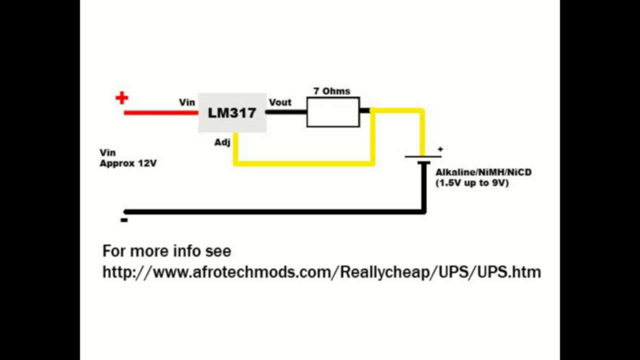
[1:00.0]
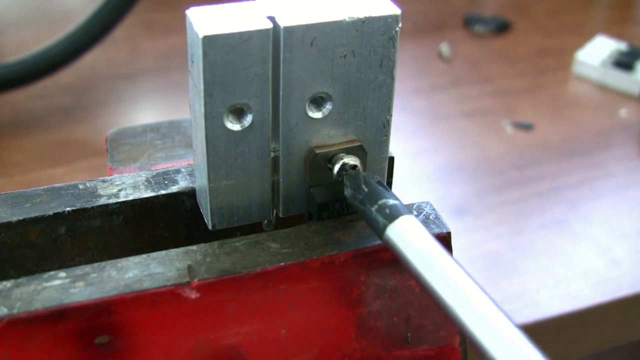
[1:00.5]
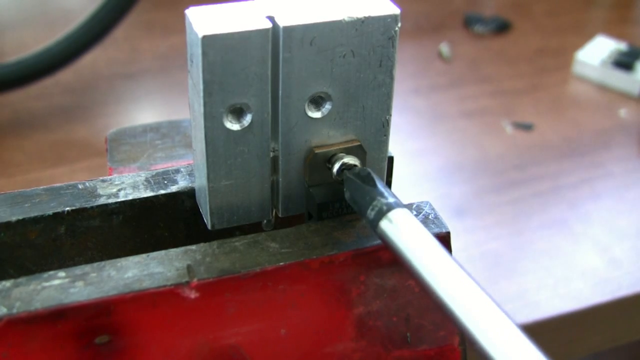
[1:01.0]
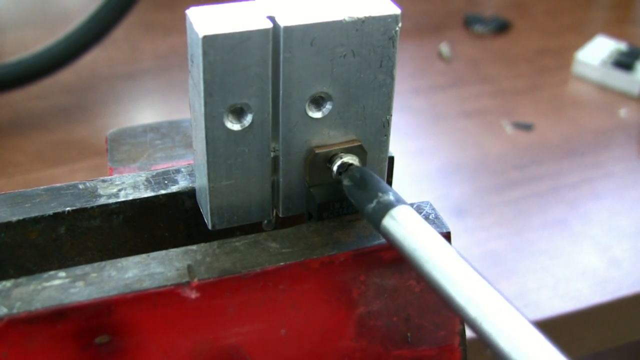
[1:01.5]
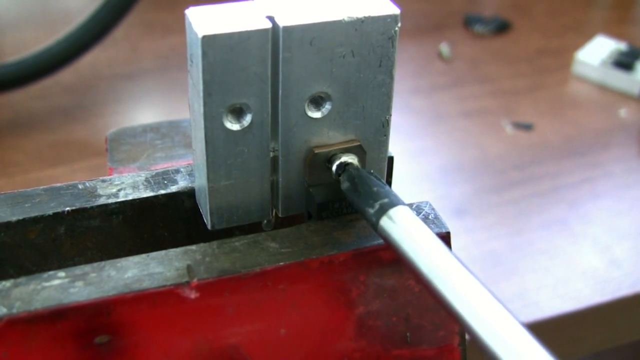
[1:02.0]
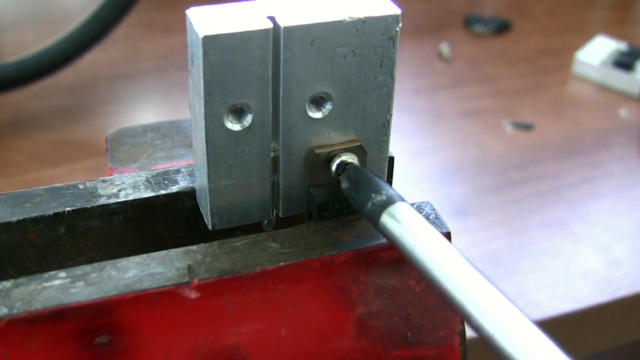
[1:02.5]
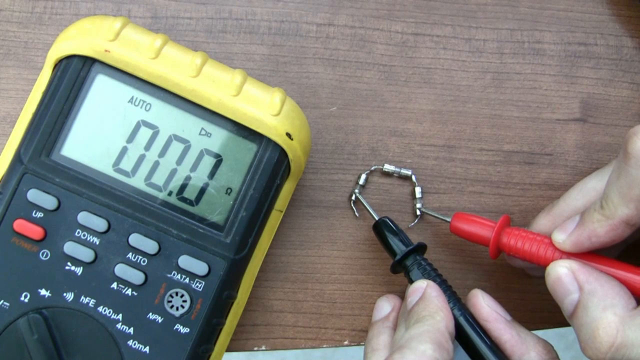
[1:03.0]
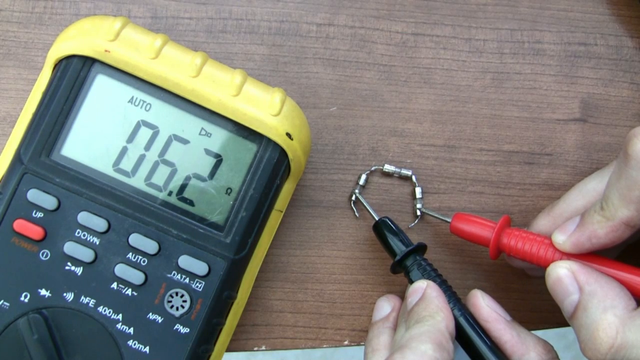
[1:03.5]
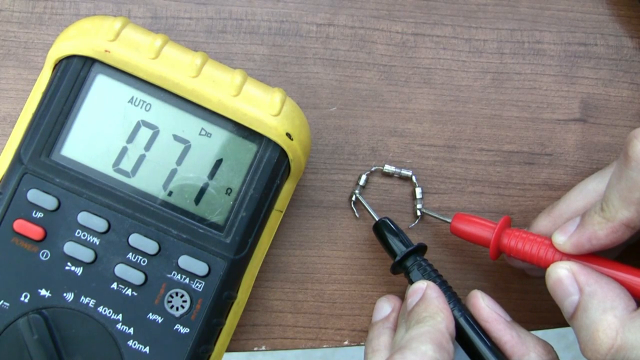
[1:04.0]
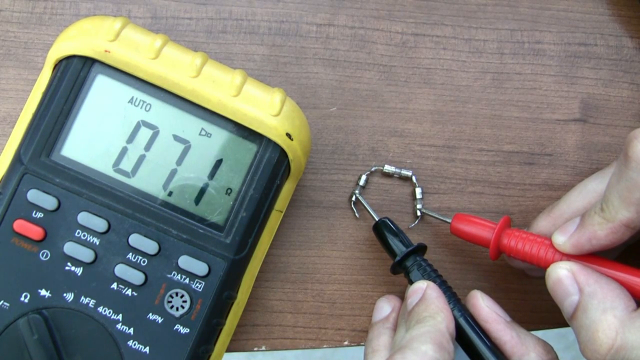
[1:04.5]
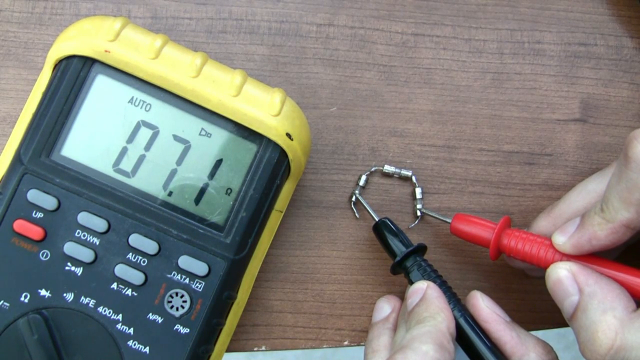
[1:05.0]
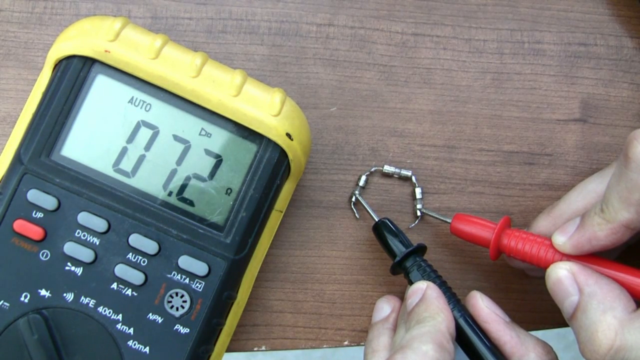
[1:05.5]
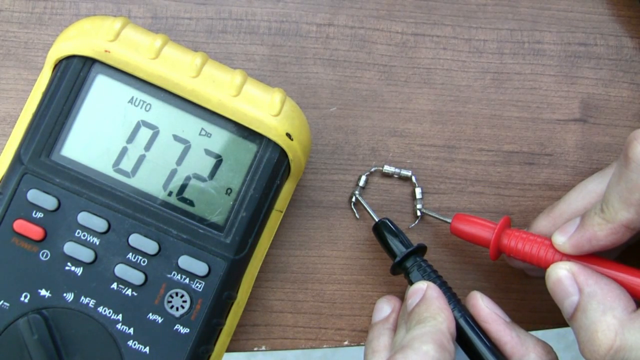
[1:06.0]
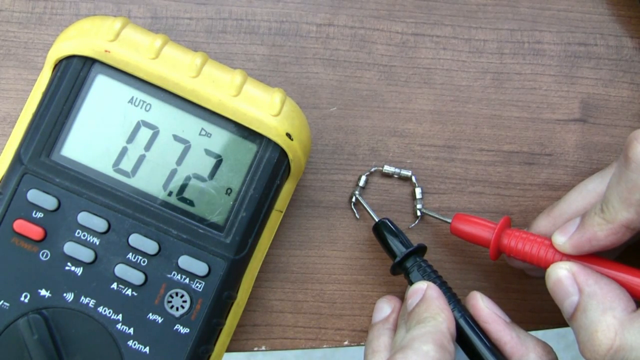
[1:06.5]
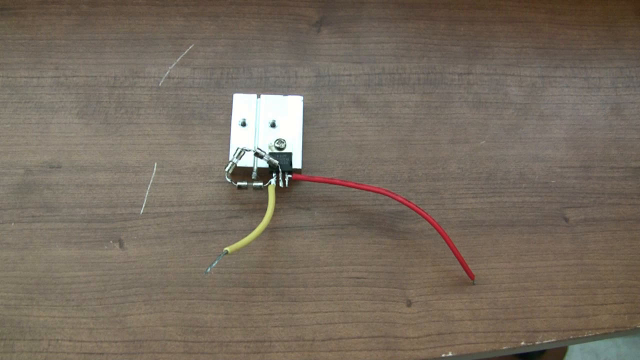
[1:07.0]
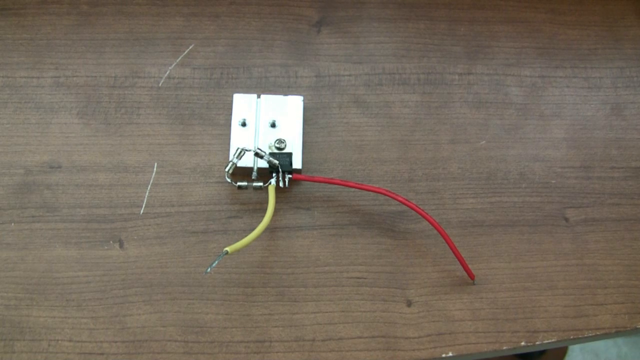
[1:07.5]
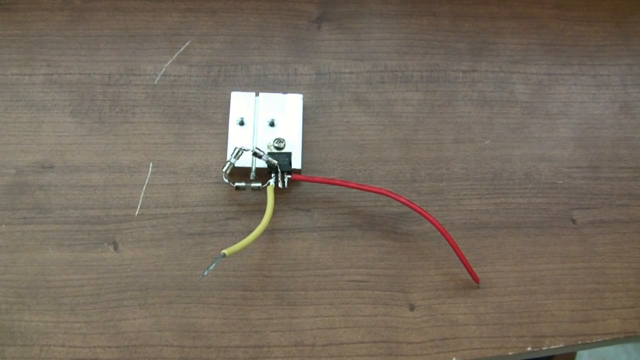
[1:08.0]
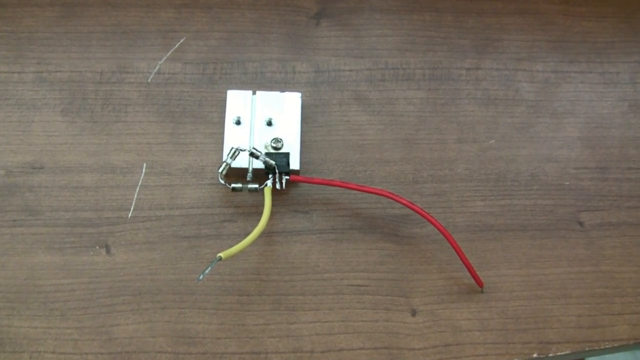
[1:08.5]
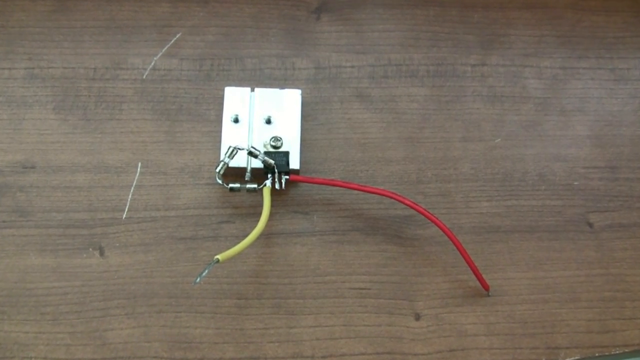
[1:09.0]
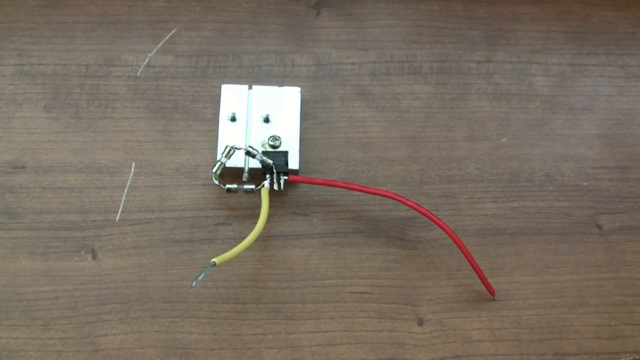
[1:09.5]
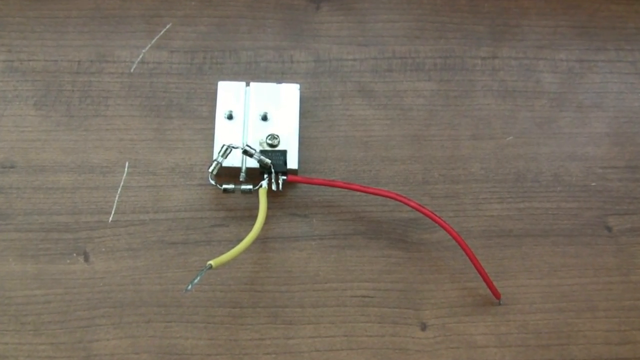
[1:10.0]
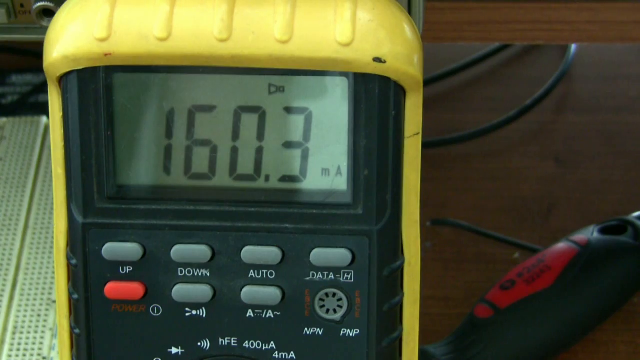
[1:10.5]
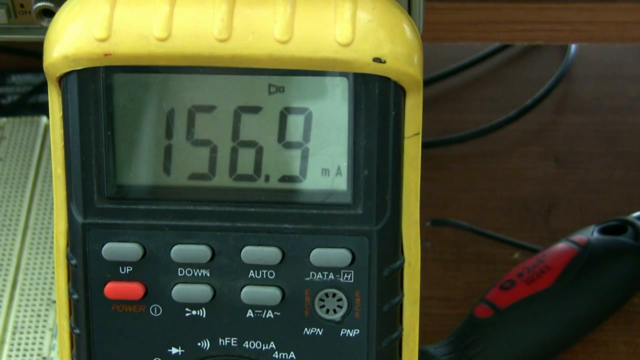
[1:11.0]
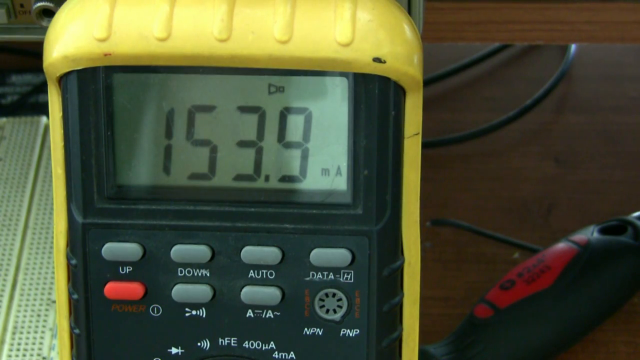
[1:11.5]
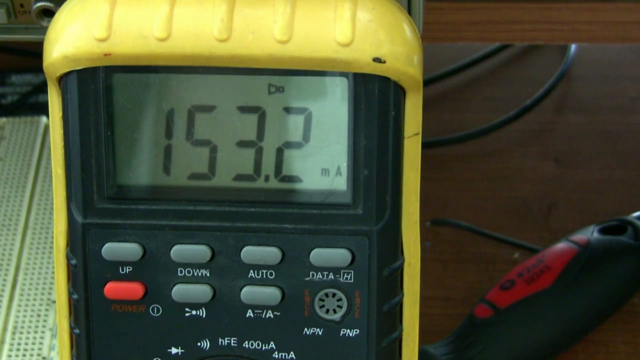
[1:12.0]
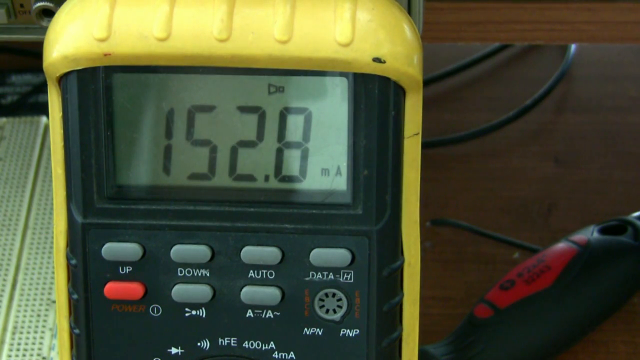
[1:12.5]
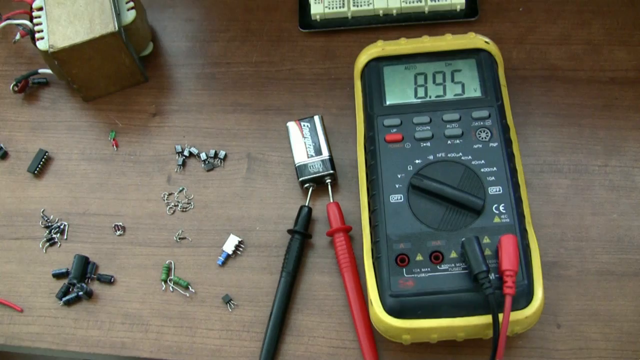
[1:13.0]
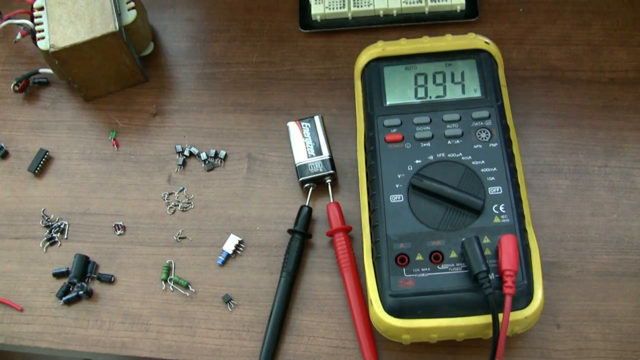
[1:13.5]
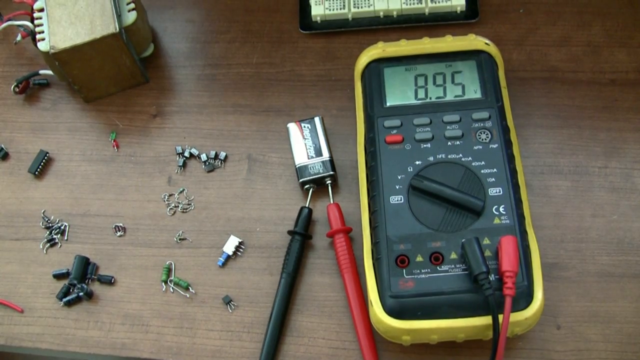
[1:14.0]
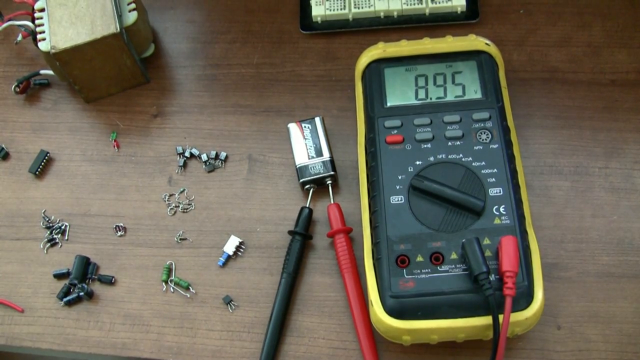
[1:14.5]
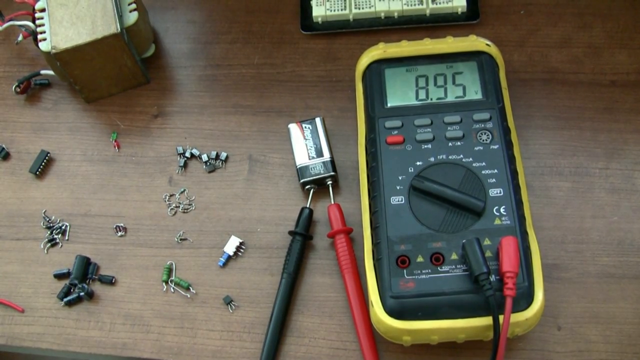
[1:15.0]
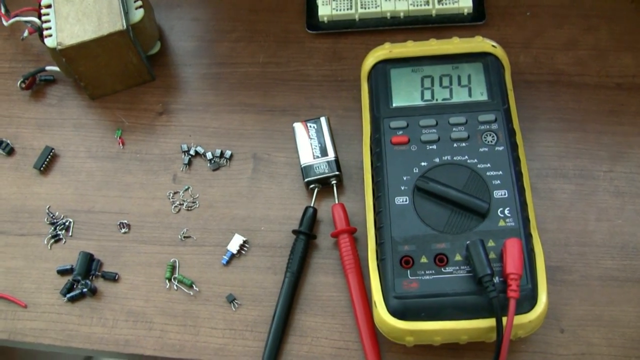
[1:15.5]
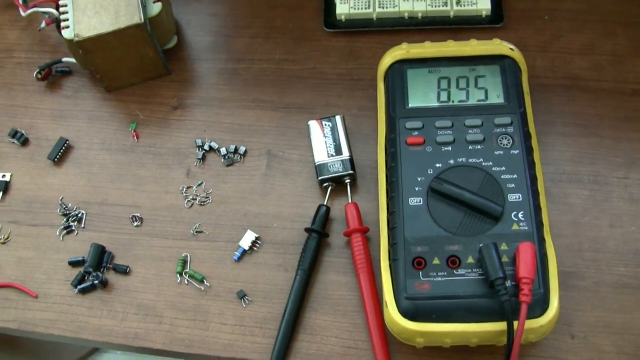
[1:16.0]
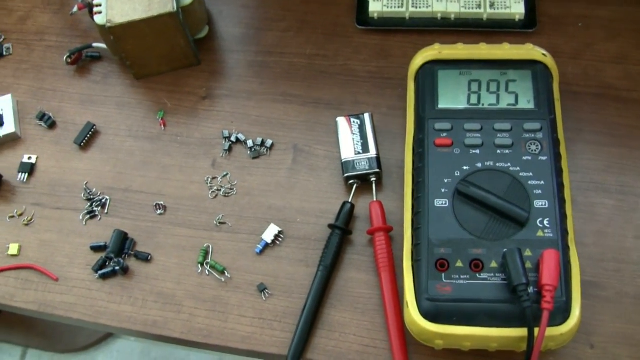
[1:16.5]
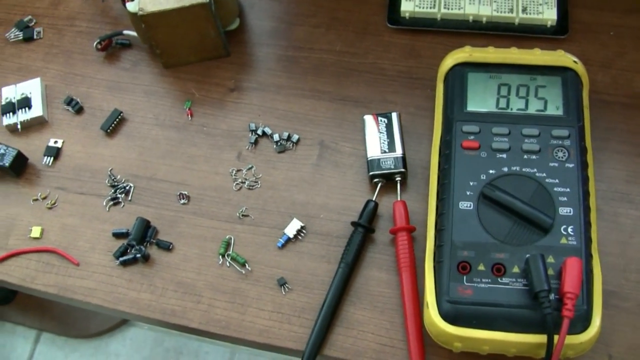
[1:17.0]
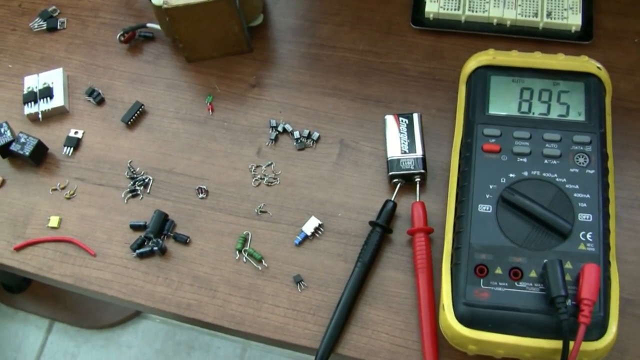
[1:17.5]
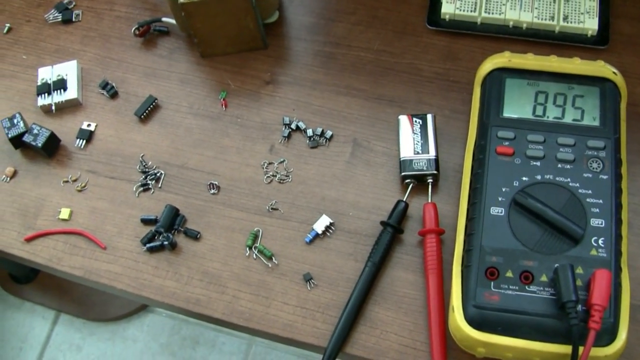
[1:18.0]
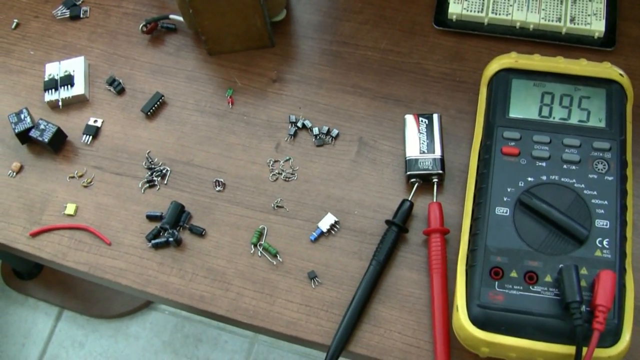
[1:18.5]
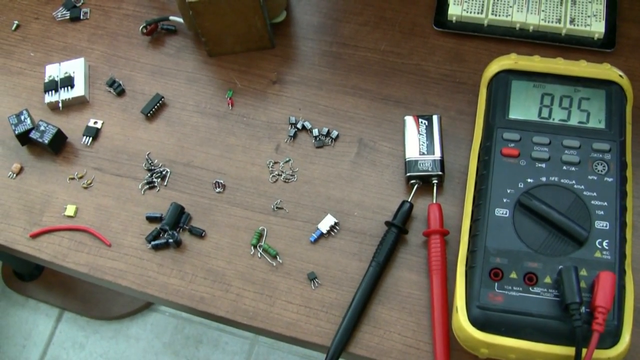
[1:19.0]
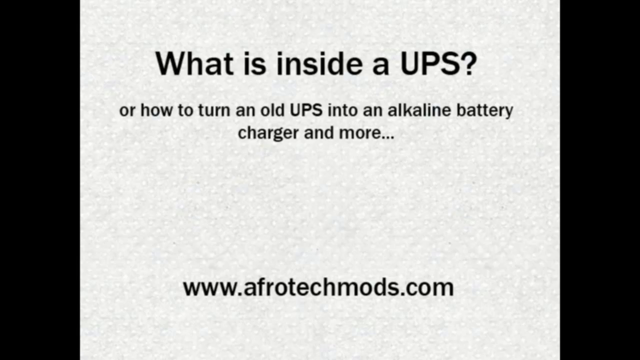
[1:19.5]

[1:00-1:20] Equipment that goes into an uninterruptible power supply is shown. Some pieces of the power supply look like earrings; one is black and silver, and another set is green and silver. There is a red light and a green light, on a desk. A silver metal component has a sky blue handle. An artist's rendering shows a black line that meets a yellow line, then meets a black line, and then goes around the black line to a red line. There is a plus sign and a minus sign. Words read "approximately 12 volts". Other text includes "alkaline" and "1.6 volts, up to nine volts".